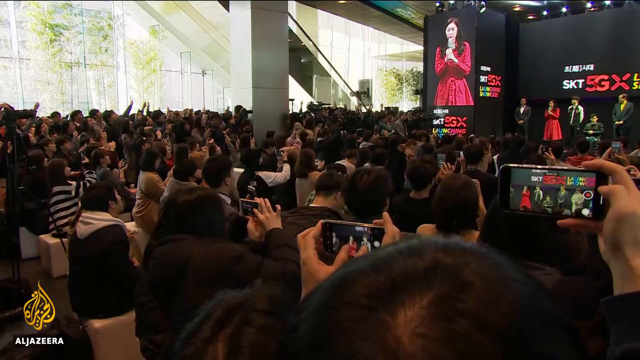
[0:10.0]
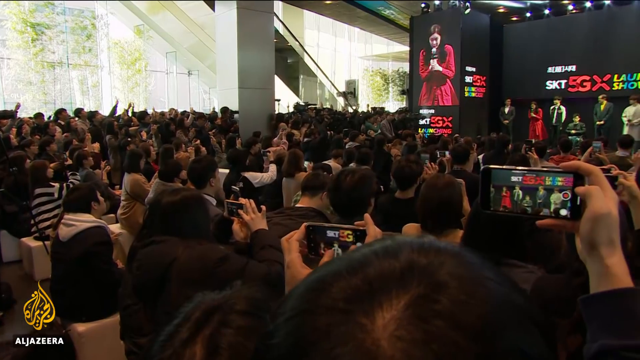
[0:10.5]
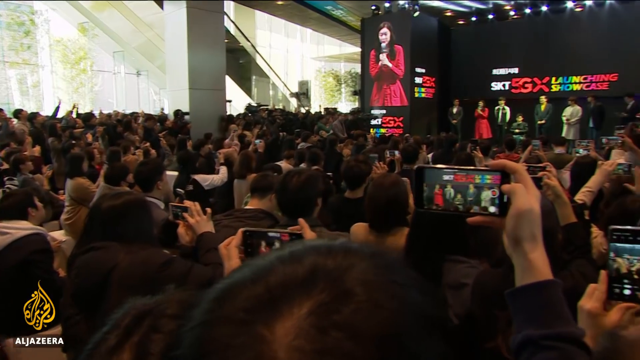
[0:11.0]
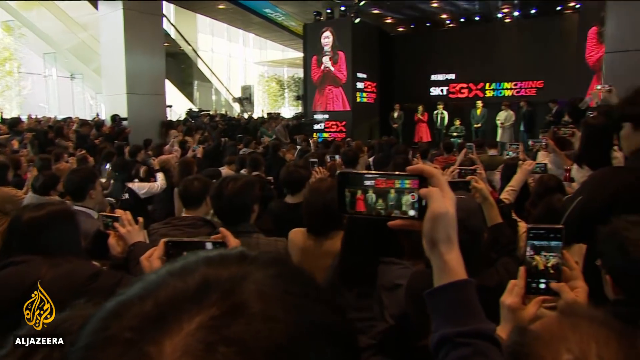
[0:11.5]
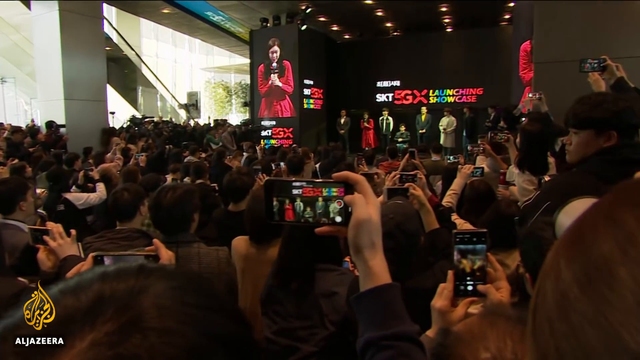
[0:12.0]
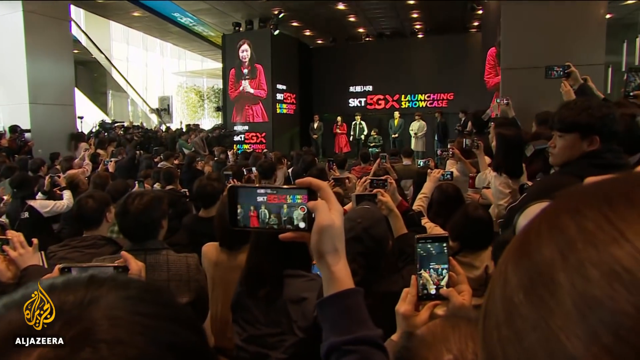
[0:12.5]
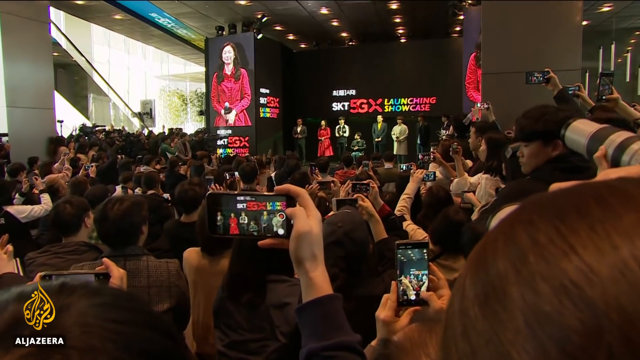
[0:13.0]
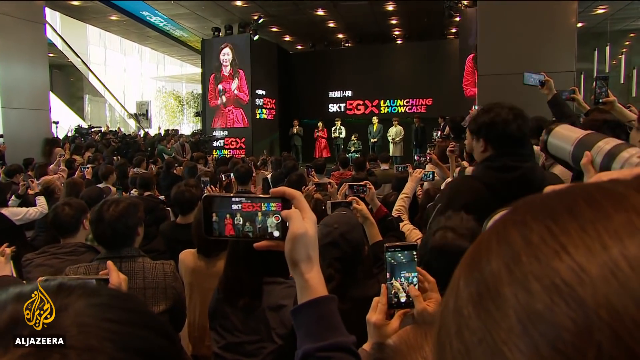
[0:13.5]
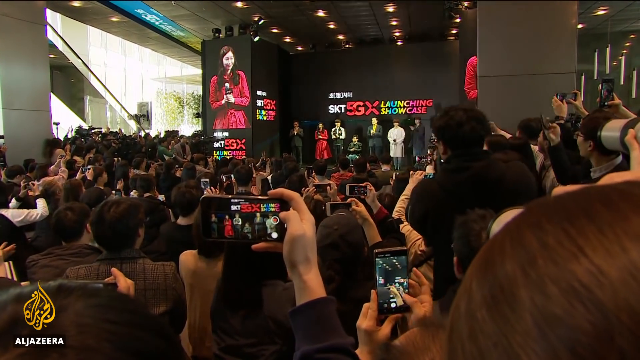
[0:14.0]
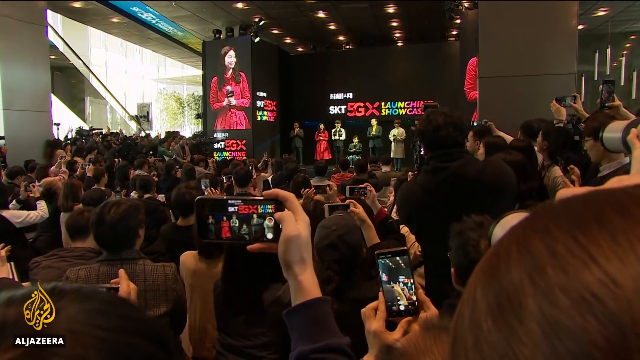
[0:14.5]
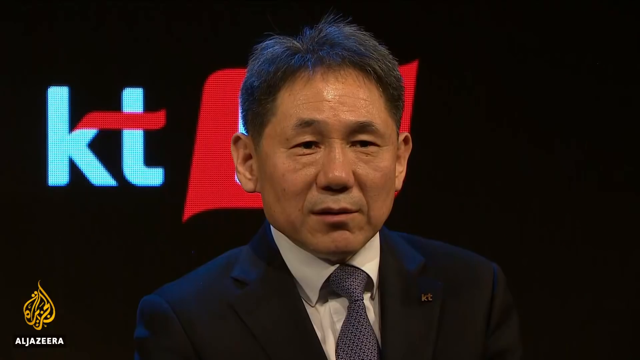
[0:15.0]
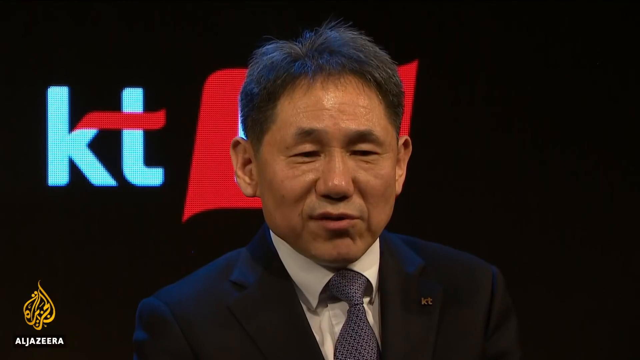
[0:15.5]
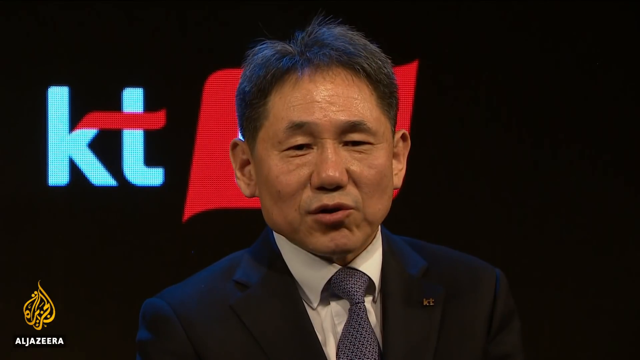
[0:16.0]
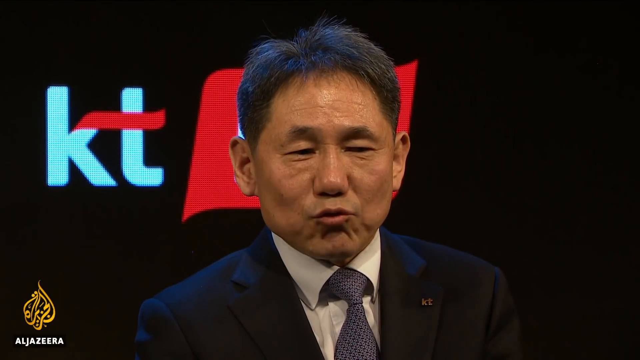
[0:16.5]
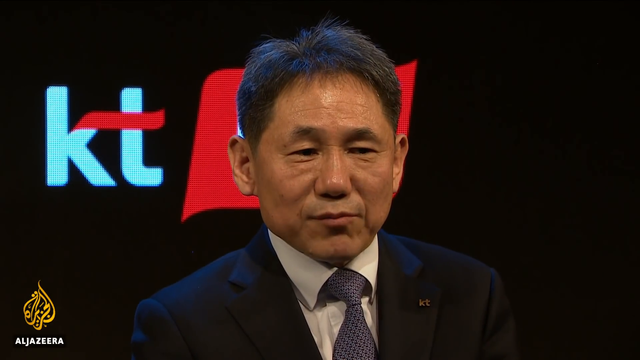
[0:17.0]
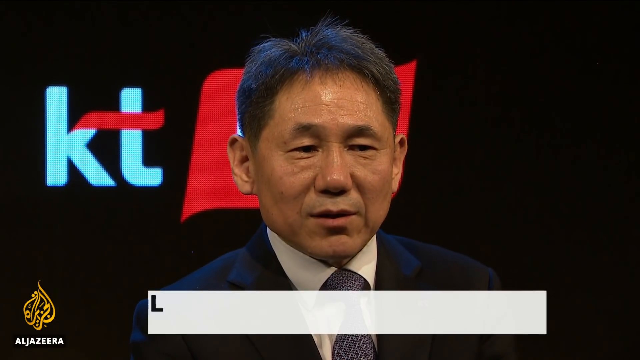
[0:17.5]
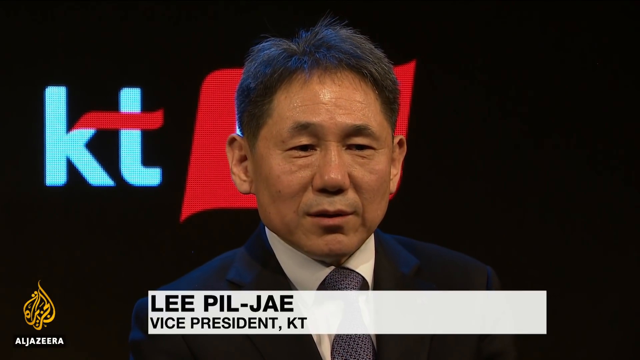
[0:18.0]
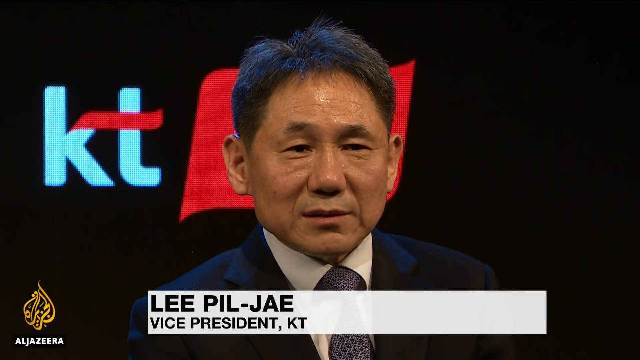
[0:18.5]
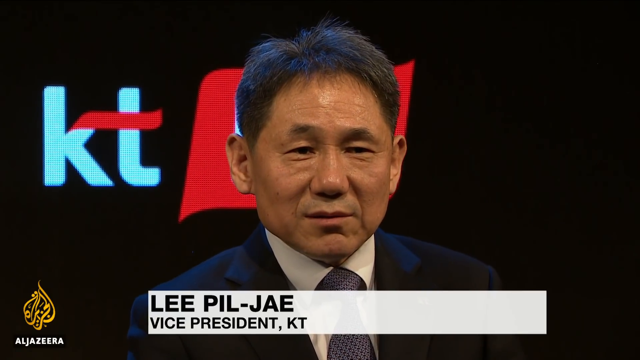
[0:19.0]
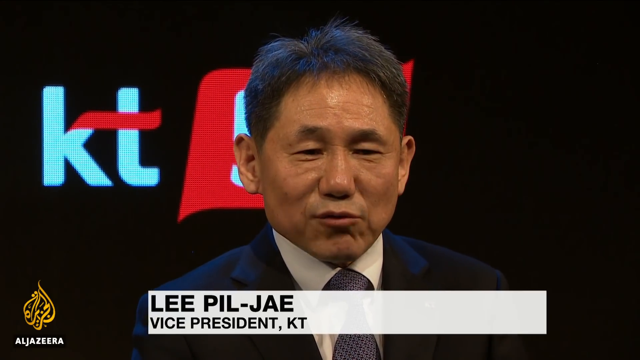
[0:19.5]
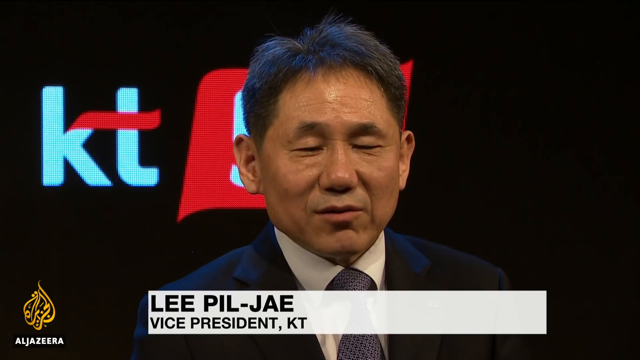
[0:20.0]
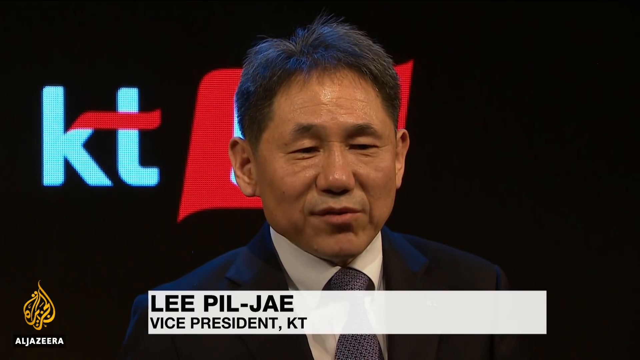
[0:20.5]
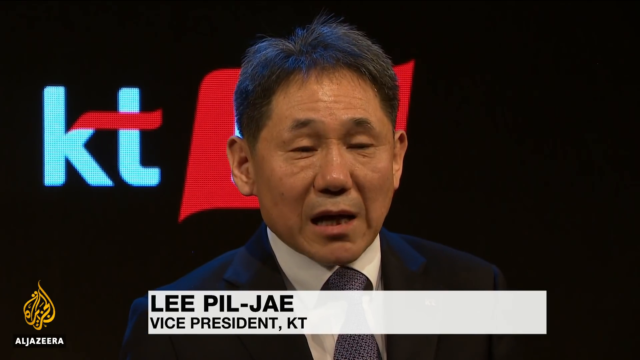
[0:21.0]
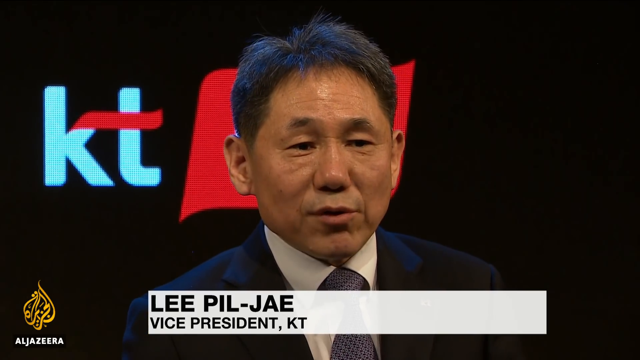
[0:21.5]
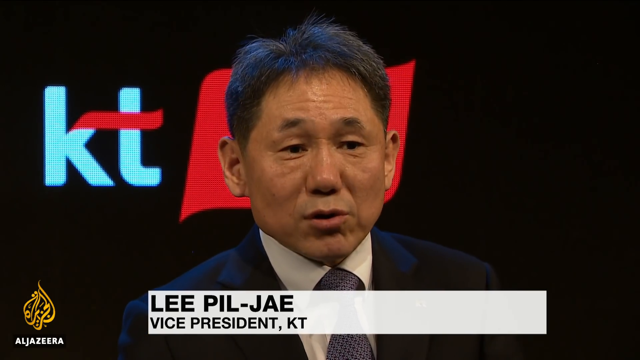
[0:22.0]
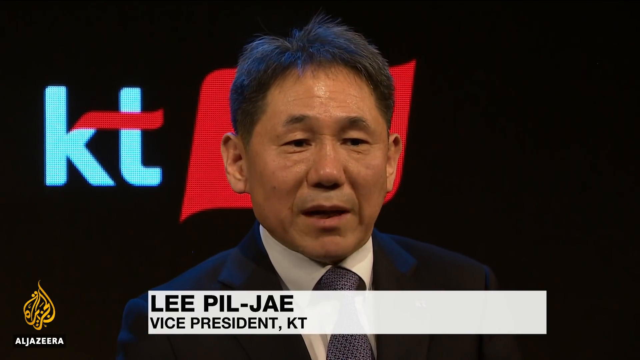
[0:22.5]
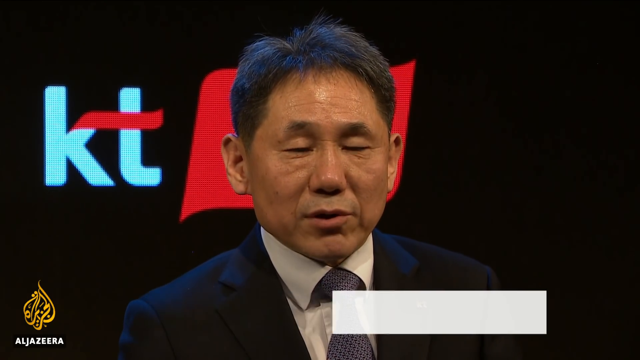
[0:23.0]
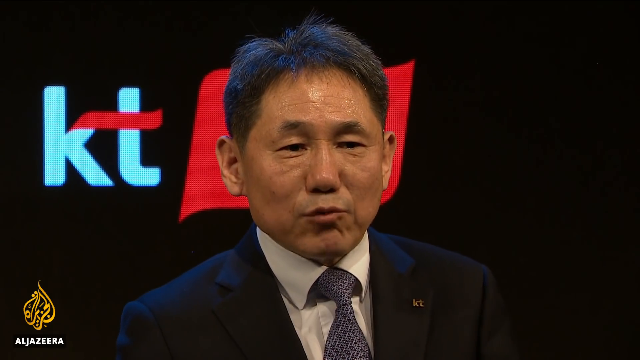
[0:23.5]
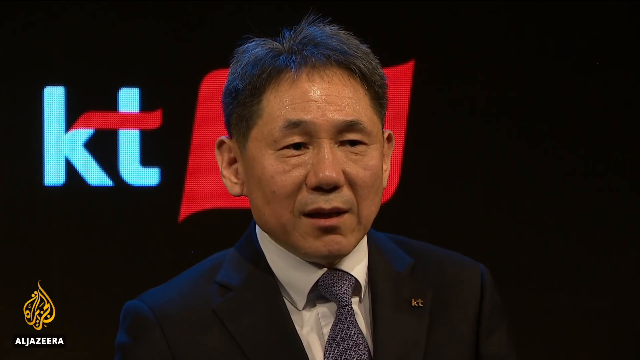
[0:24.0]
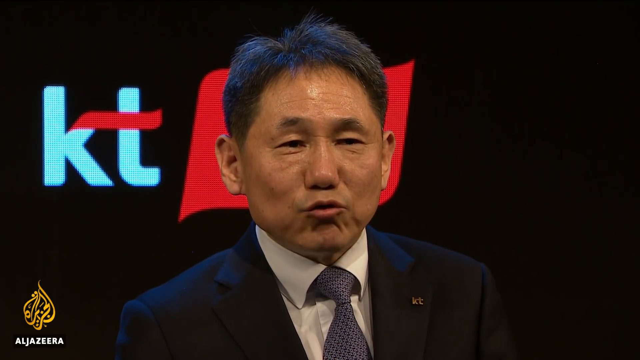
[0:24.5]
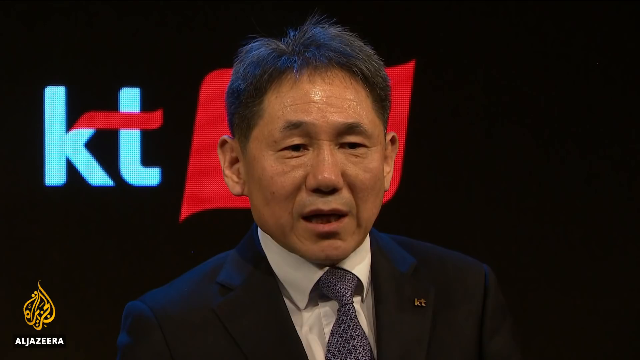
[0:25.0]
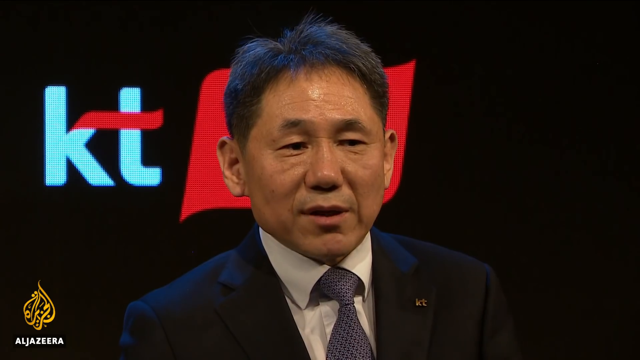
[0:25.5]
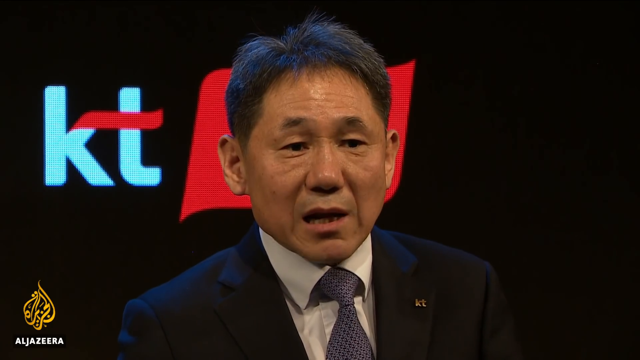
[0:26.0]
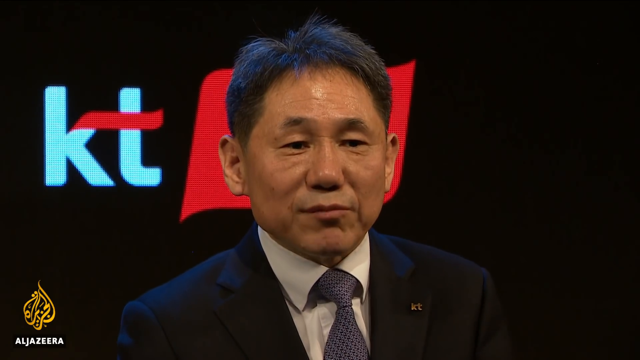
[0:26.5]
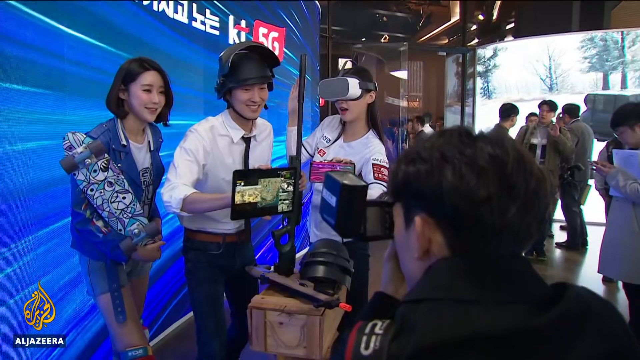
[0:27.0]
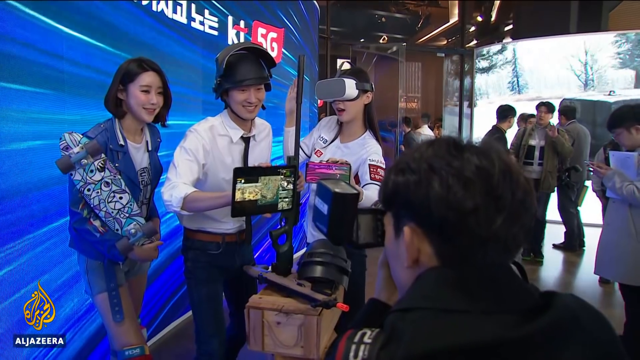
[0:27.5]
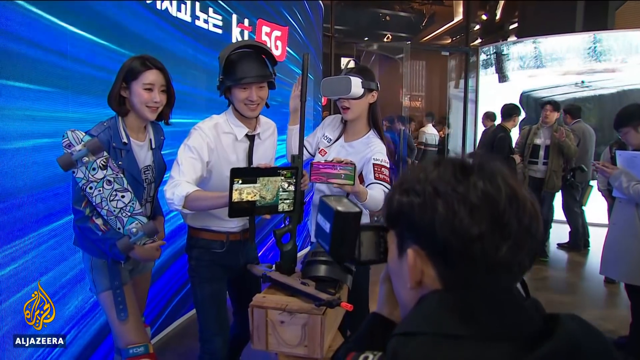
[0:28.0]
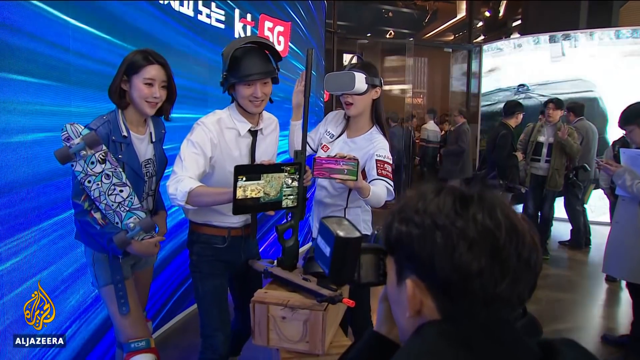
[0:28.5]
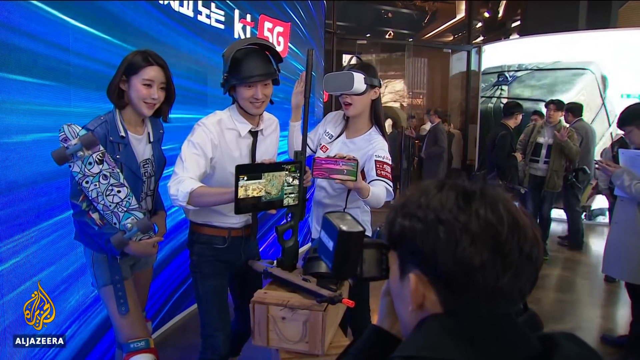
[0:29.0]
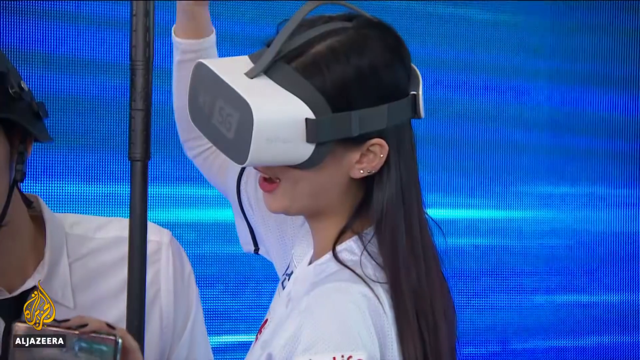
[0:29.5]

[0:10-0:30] The stage of the SKT 5GX launching showcase is seen from the audience's perspective as the camera pans through the crowd. Many audience members are recording the stage, which is reflected on phones throughout the audience. Many cameras and flashes go off, and people seem very interested in recording the stage. Seven people stand on the stage, with a large screen to their left showing a projection of one of the speakers, a young Asian woman with long brown hair in a red shirt-waisted dress. Then there is a close-up of a middle-aged Asian man with short grayish-black hair, wearing a blue suit, white shirt and gray tie, sitting on the stage and speaking. A caption identifies him as Lee Pil-Jae, vice president of KT. After he speaks, the video cuts to people playing a VR game.